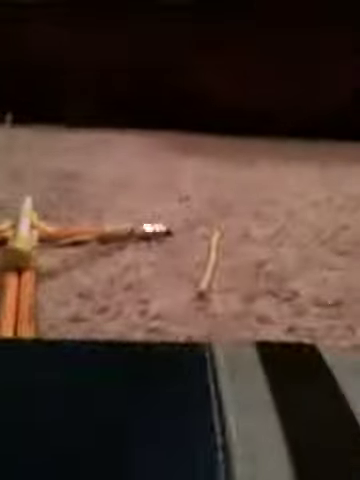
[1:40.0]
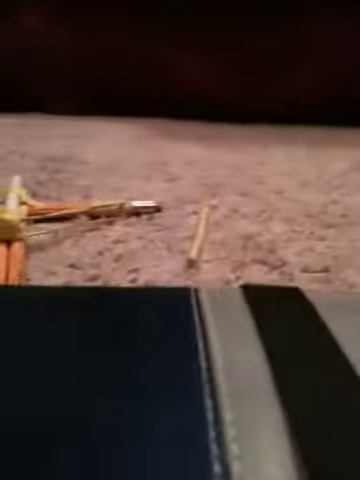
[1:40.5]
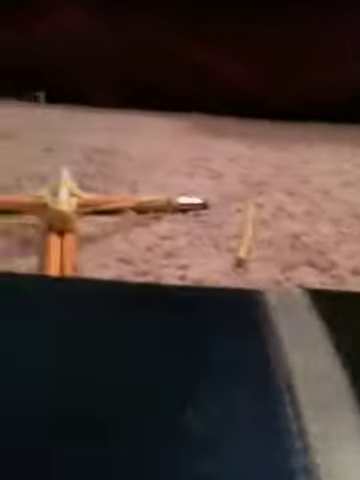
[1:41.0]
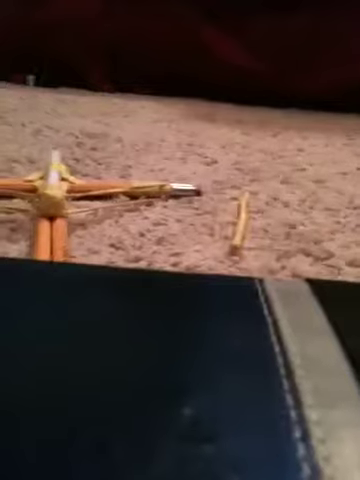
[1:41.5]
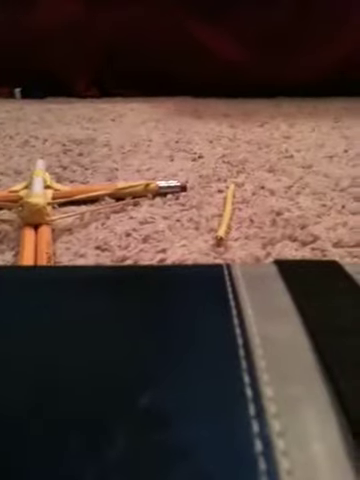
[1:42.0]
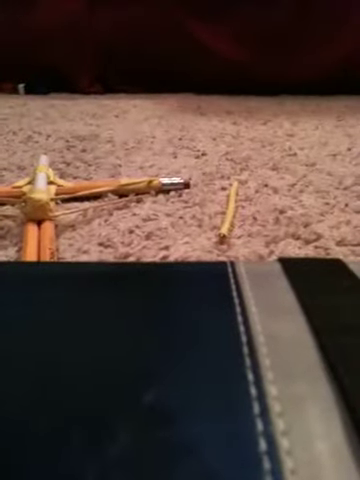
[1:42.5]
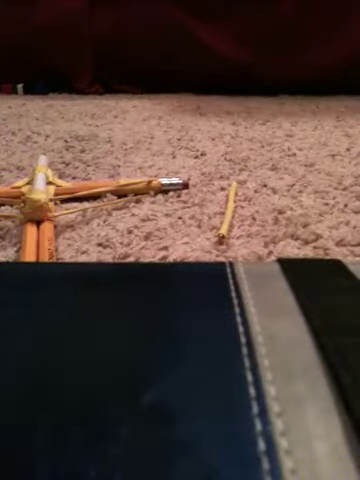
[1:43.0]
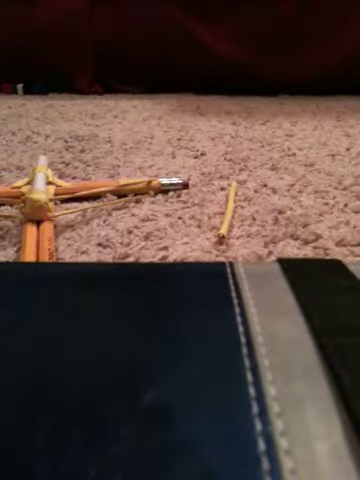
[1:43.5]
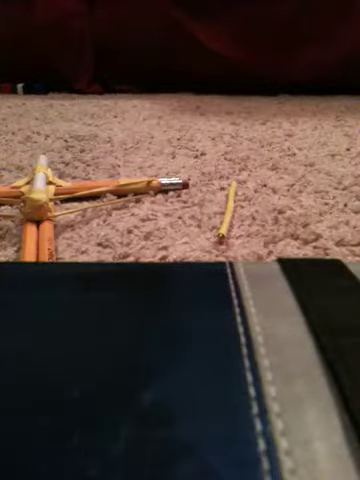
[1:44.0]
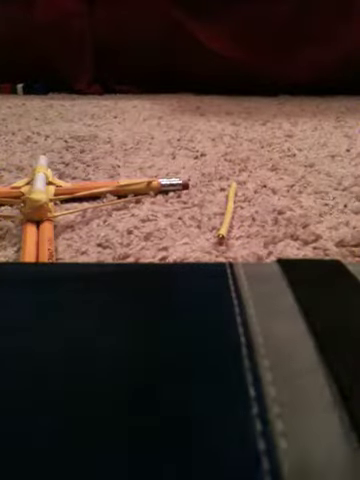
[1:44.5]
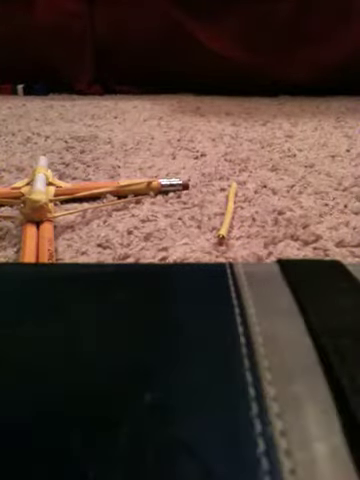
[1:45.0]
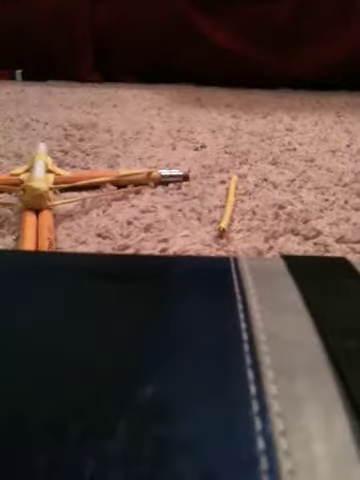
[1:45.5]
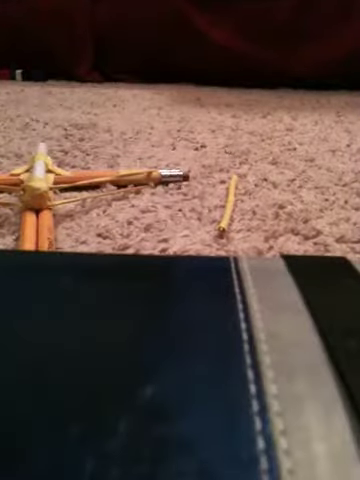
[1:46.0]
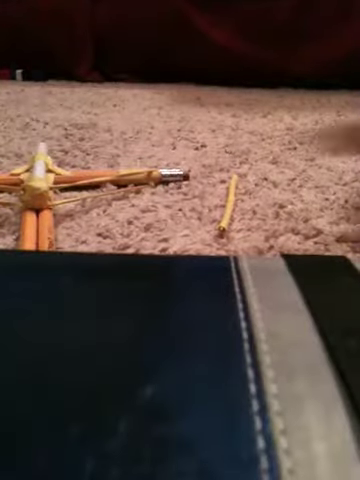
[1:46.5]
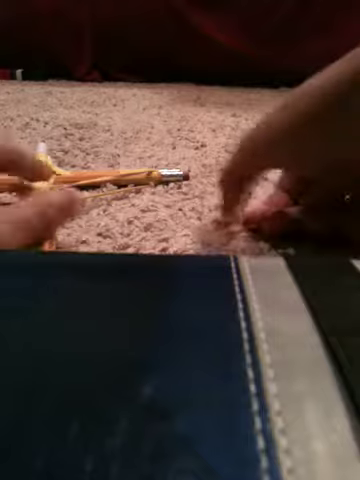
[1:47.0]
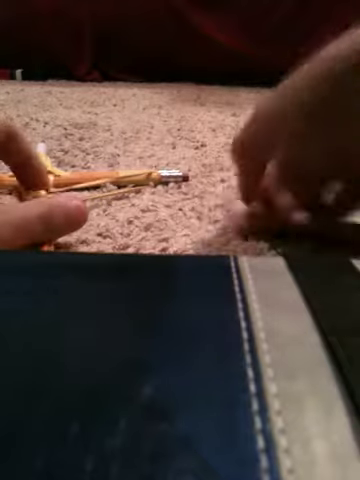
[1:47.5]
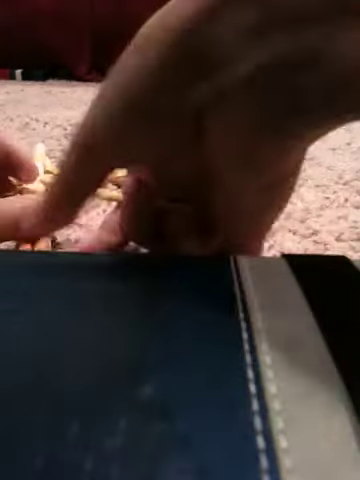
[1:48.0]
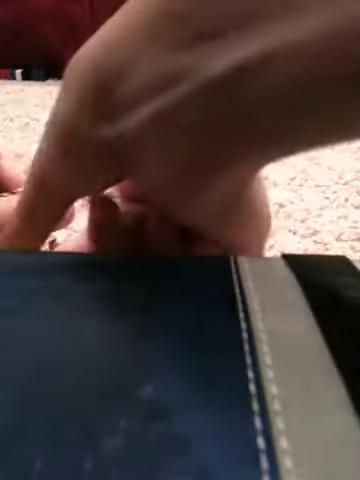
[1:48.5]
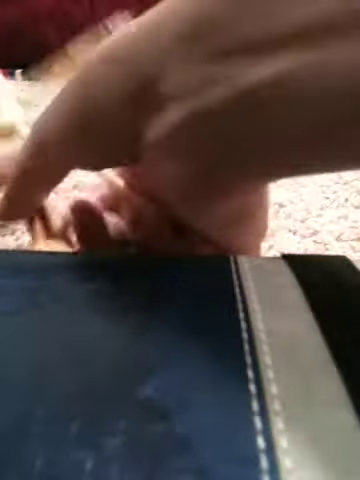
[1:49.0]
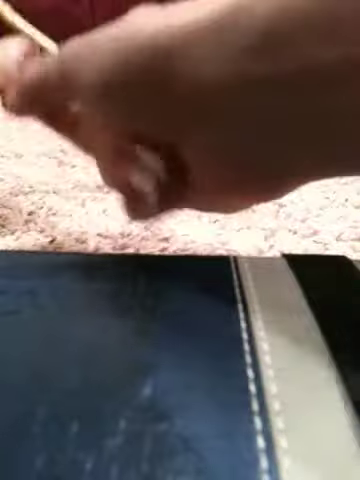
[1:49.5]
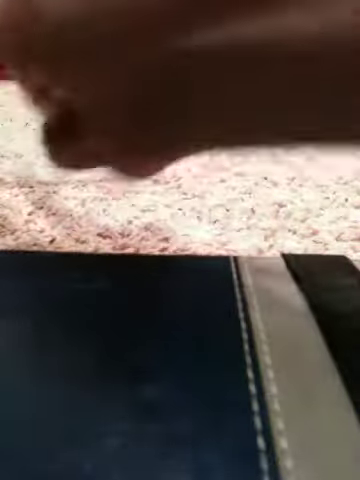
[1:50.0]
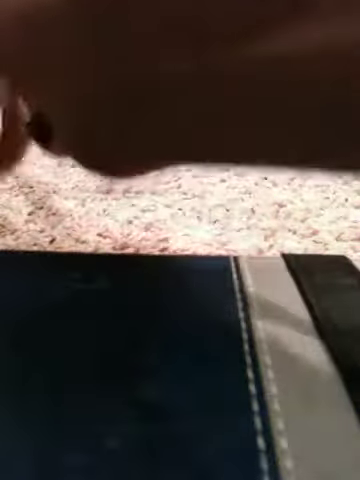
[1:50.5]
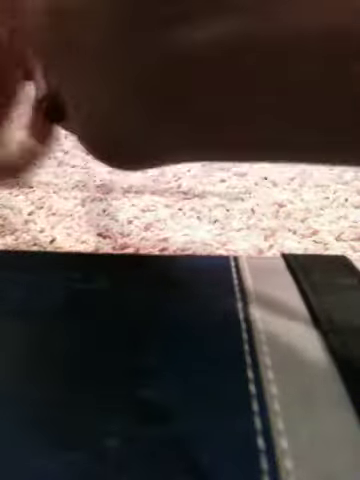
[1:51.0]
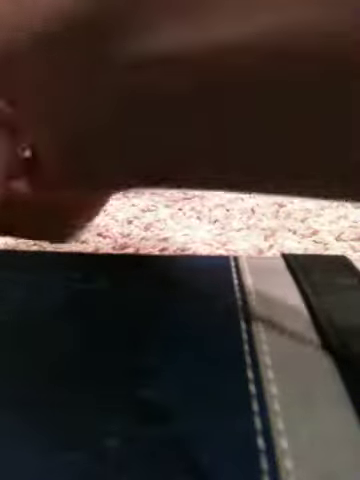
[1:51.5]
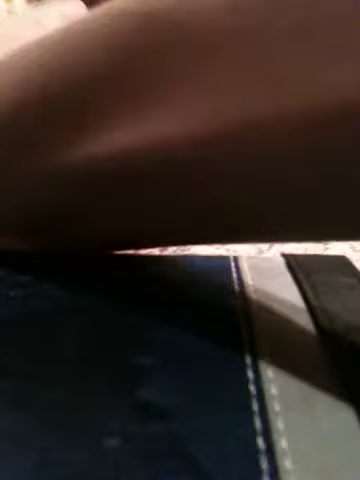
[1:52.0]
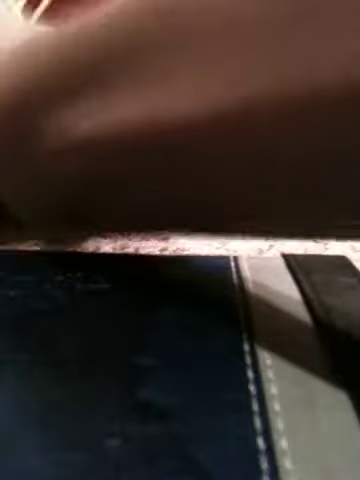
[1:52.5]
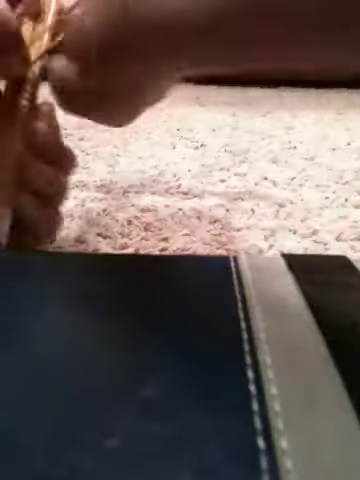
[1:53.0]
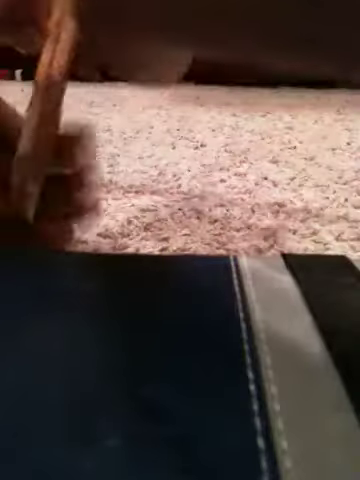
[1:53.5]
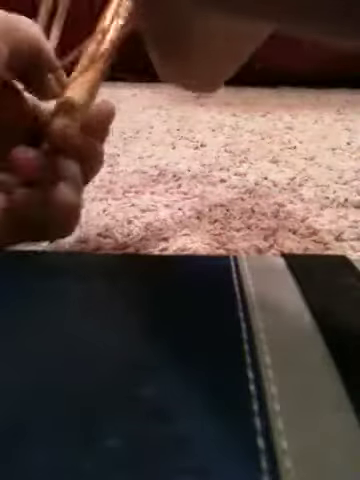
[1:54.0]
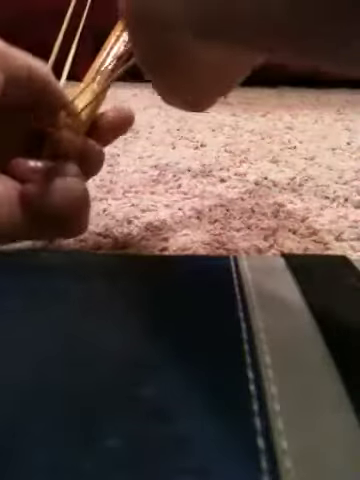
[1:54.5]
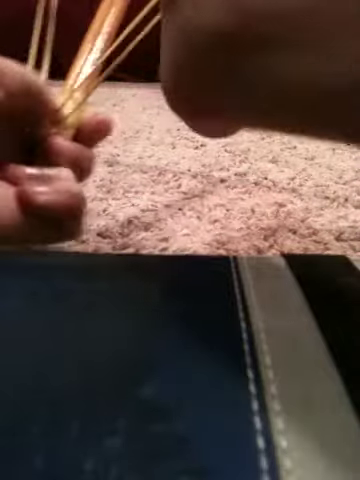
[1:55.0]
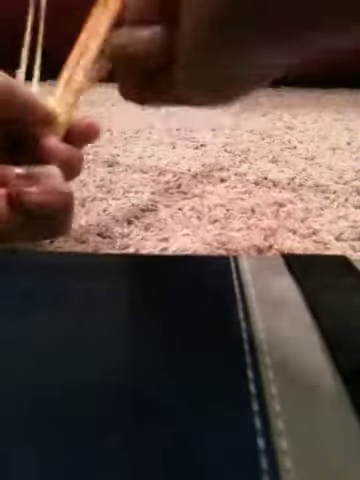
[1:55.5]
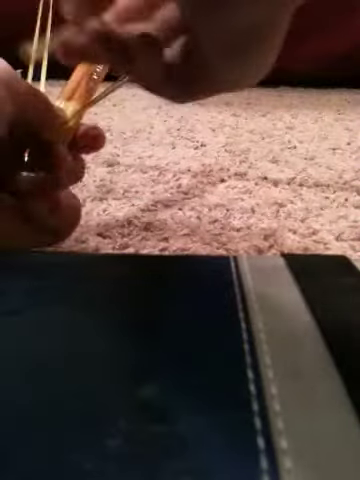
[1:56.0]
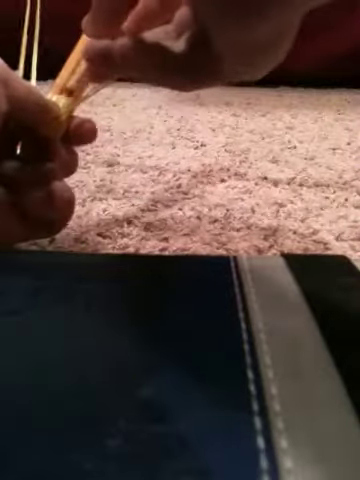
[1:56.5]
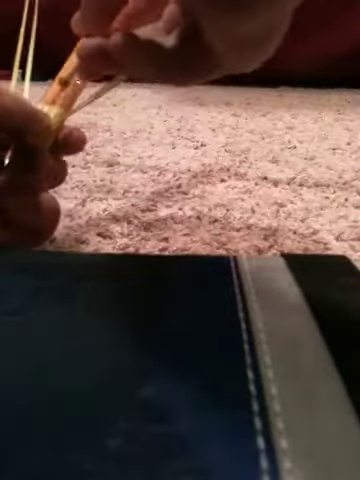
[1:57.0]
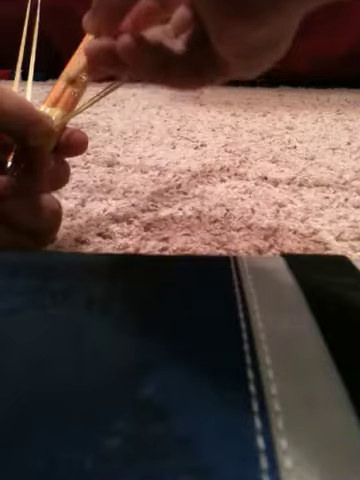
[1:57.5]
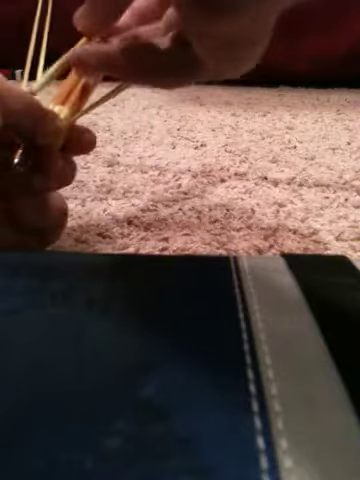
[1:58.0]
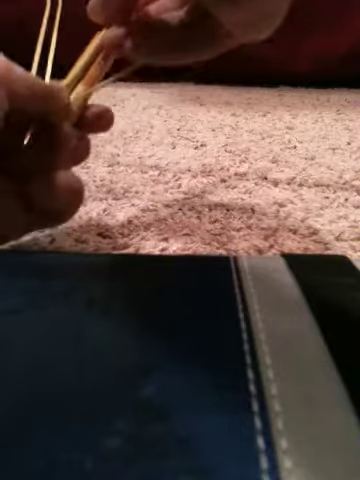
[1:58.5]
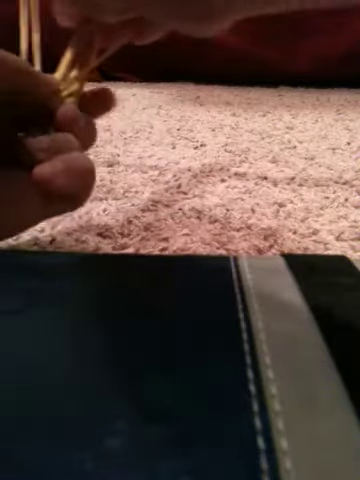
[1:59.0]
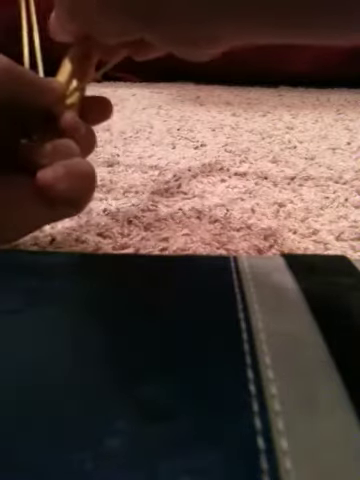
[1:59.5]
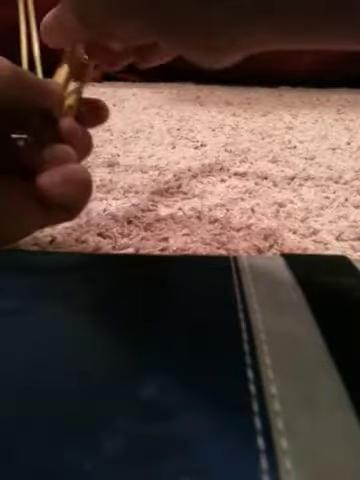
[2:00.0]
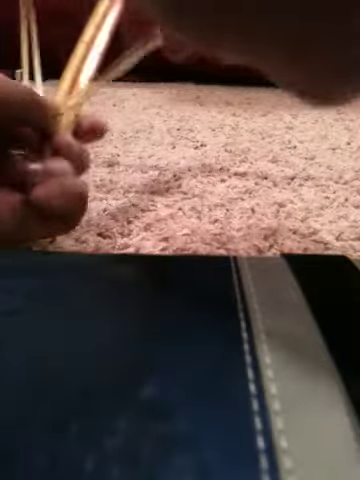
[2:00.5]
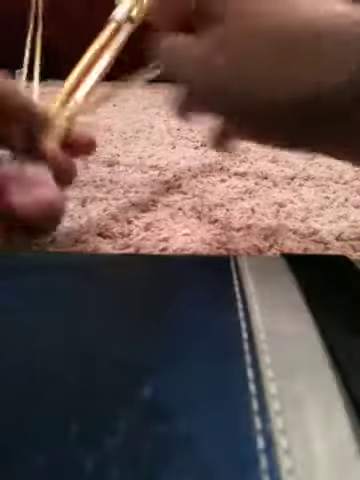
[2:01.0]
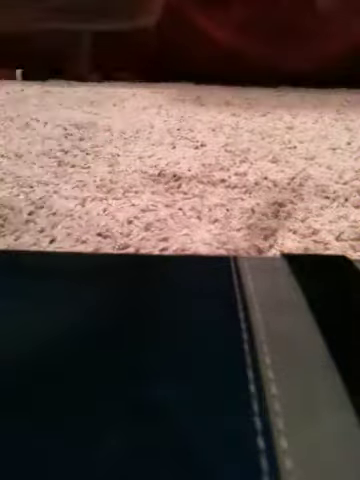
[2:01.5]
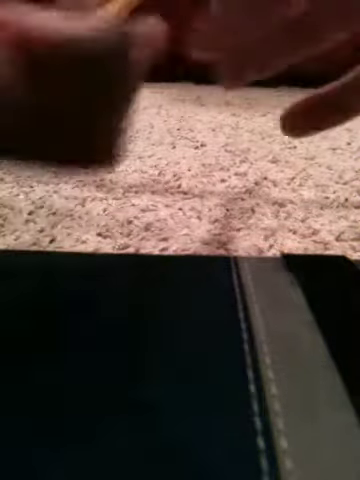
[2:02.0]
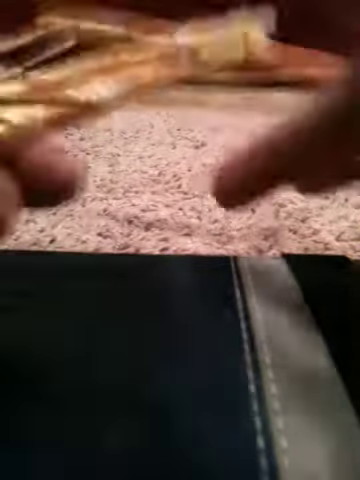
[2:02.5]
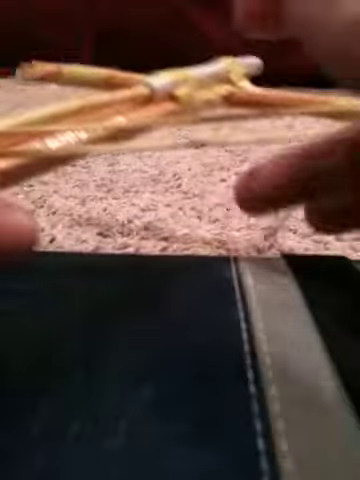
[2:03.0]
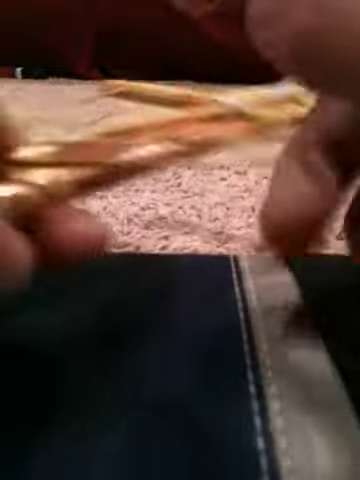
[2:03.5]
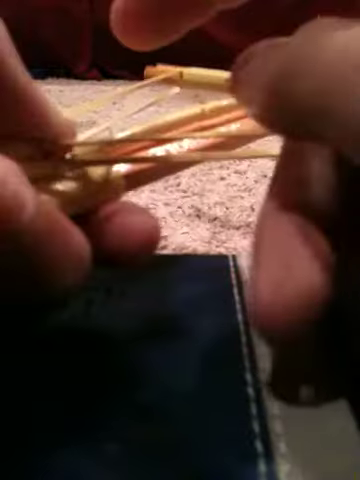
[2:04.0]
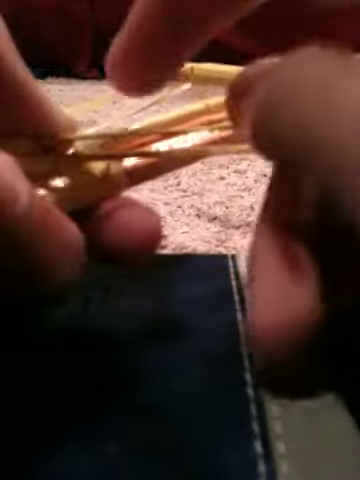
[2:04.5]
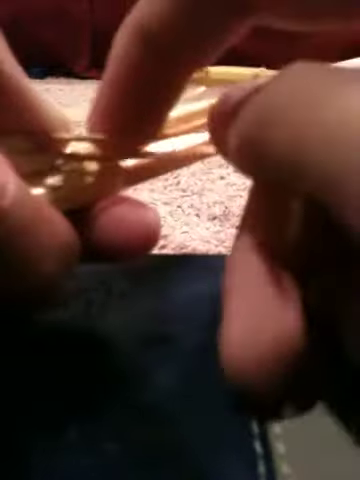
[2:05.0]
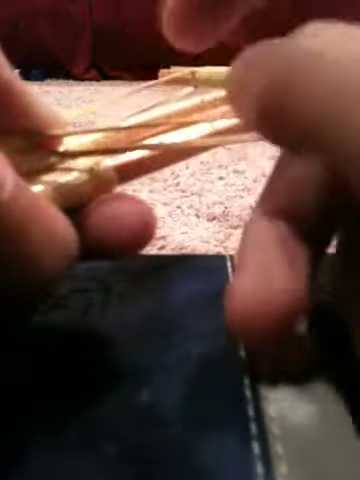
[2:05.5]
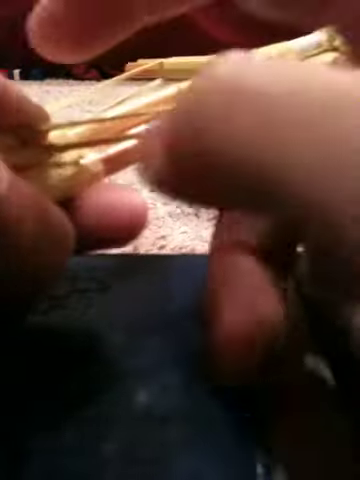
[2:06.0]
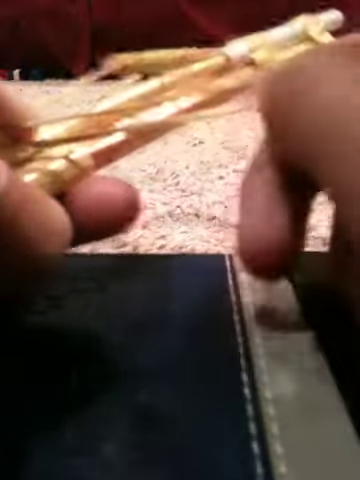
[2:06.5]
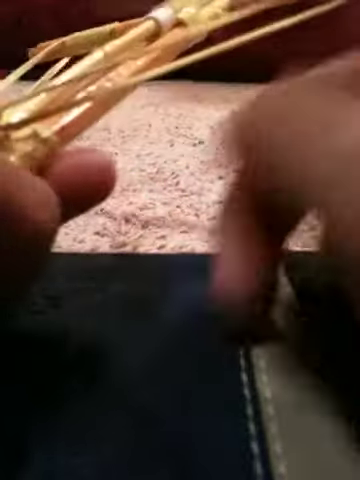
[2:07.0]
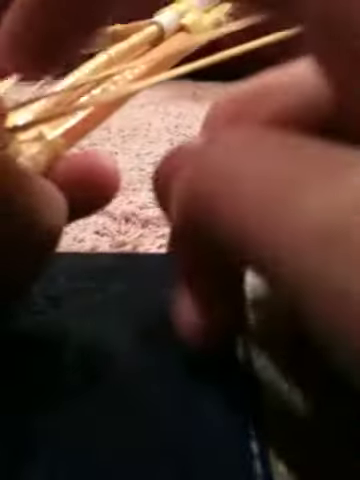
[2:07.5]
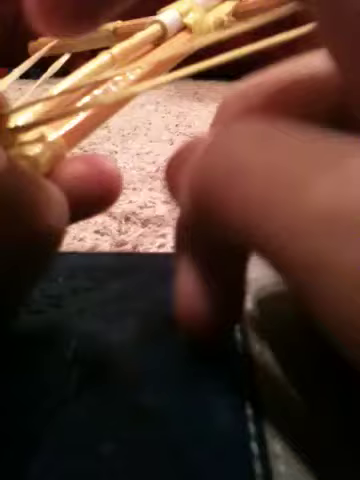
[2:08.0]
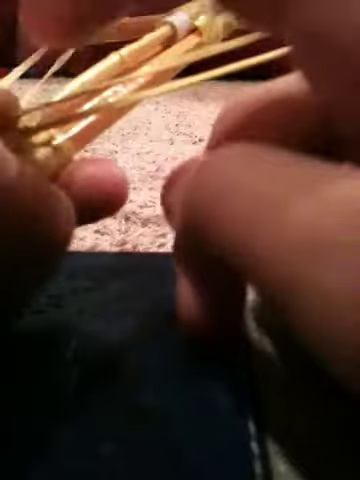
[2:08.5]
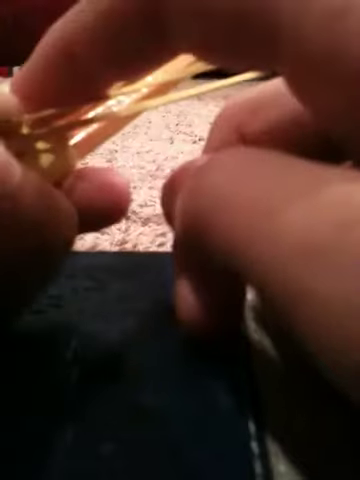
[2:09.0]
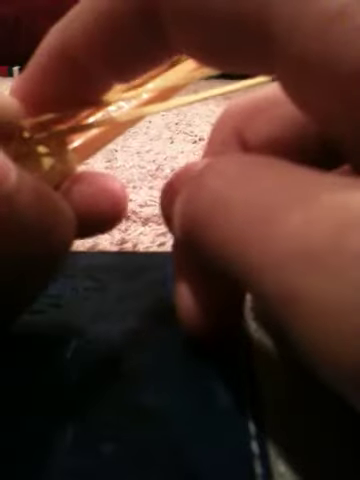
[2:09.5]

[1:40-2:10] The pencil crossbow has an elastic band for launching what appears to be a crossbow bolt made of a wooden skewer. The camera is mounted on a device that appears to be a black box with a grey stripe. The user picks up what appears to be the crossbow bolt with his right hand and picks up the crossbow contraption with his left hand. Some manipulation happens off camera; when the device is back in the shot, the user loads the bolt held in his right hand onto the pencil crossbow held in his left hand. He shows the bolt loaded, with the elastic band pulled taut and held back by his left thumb, and taps with his right forefinger where the bolt sits in the loading section.